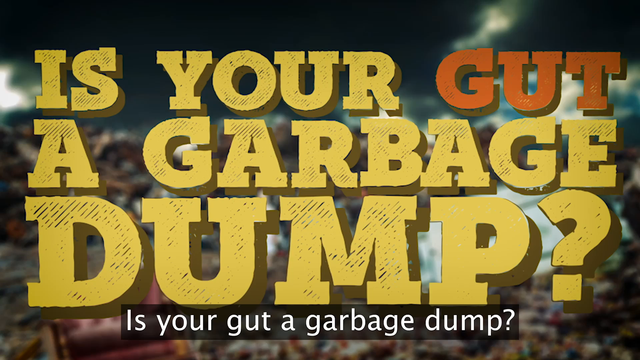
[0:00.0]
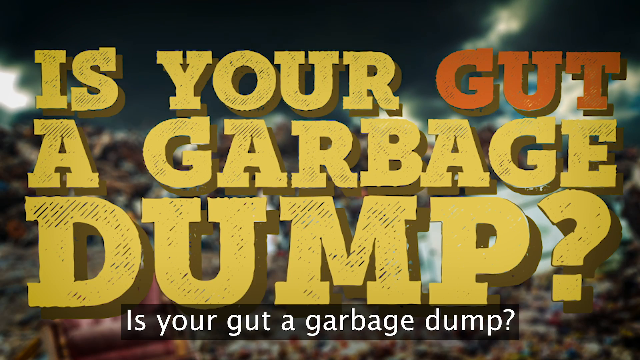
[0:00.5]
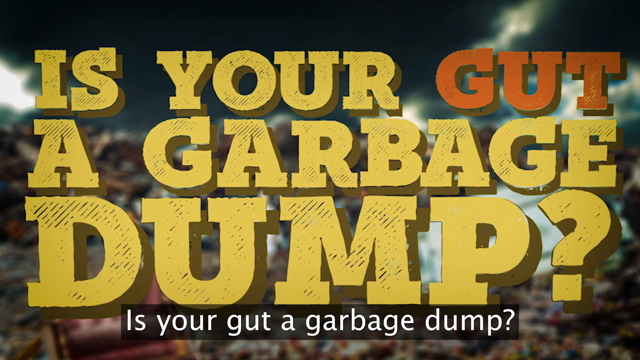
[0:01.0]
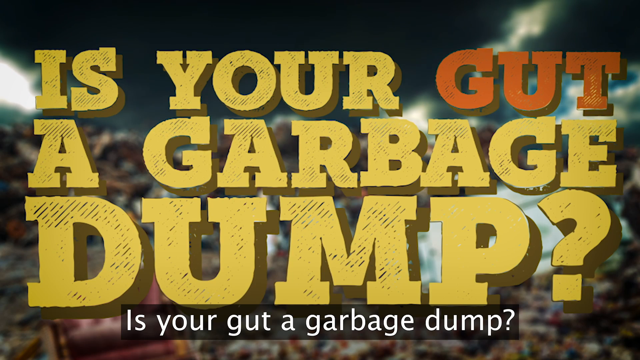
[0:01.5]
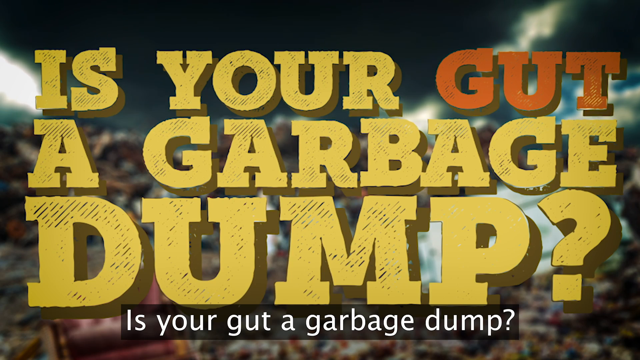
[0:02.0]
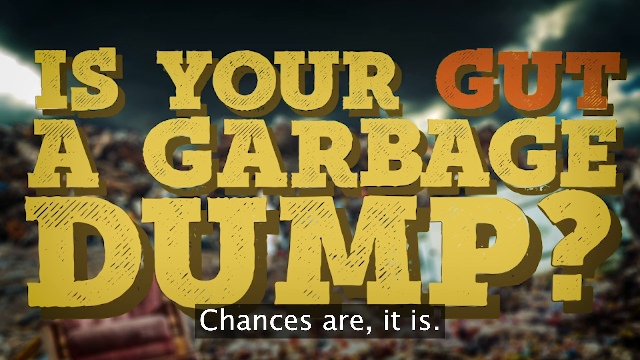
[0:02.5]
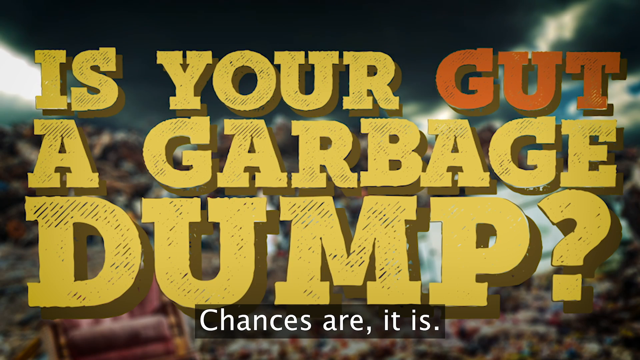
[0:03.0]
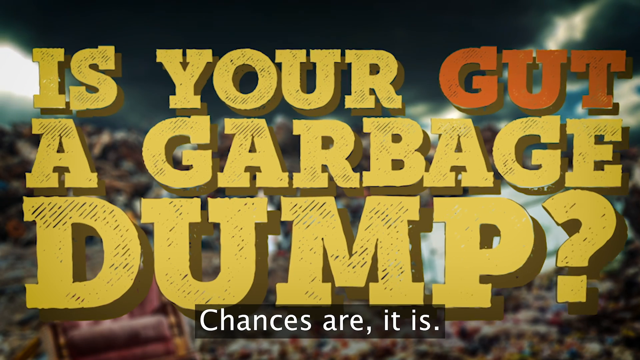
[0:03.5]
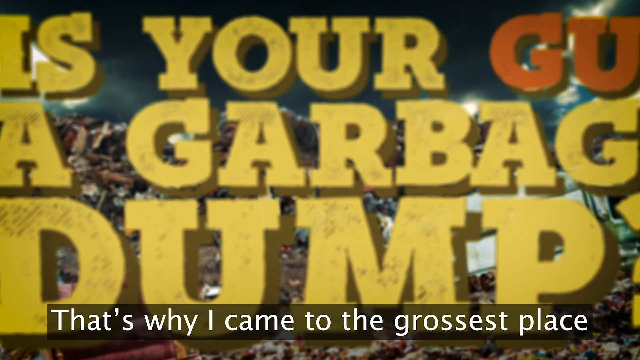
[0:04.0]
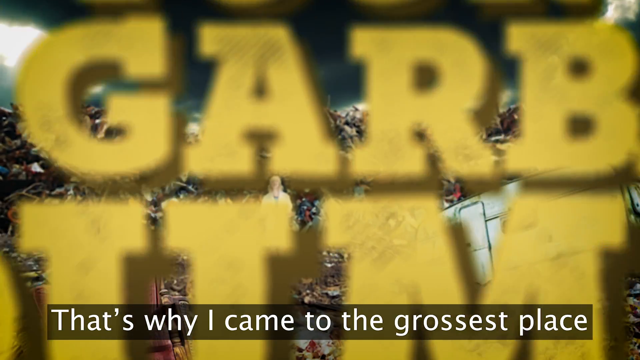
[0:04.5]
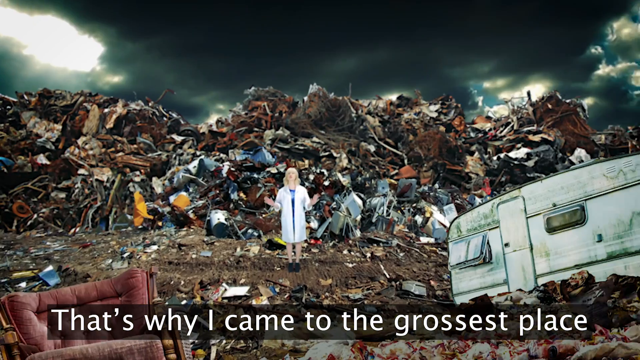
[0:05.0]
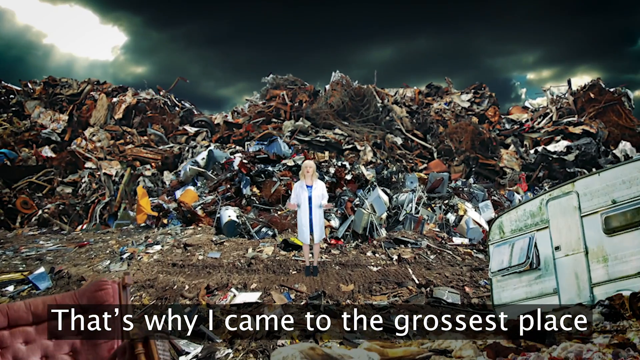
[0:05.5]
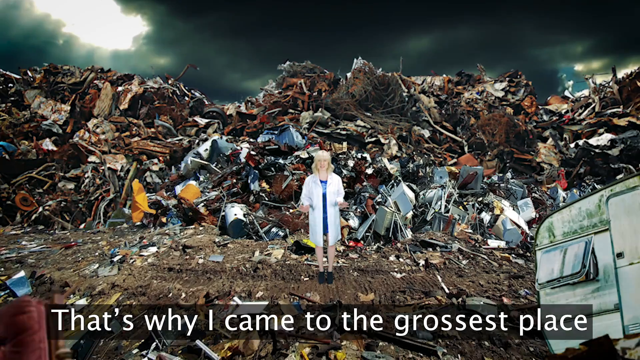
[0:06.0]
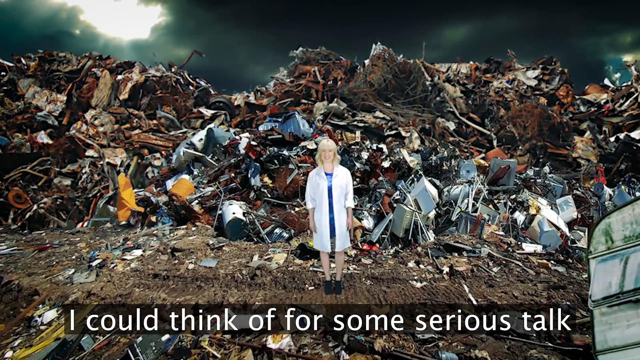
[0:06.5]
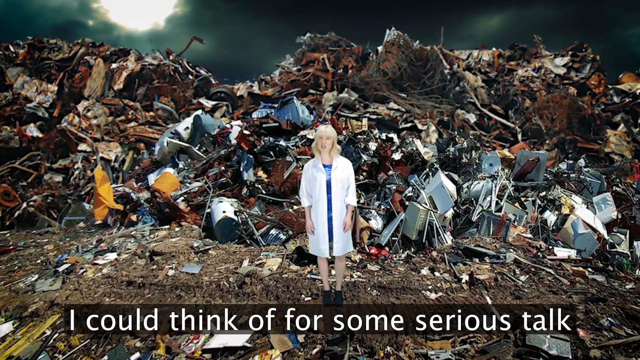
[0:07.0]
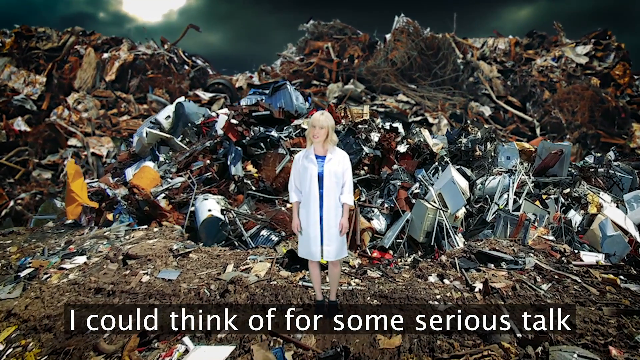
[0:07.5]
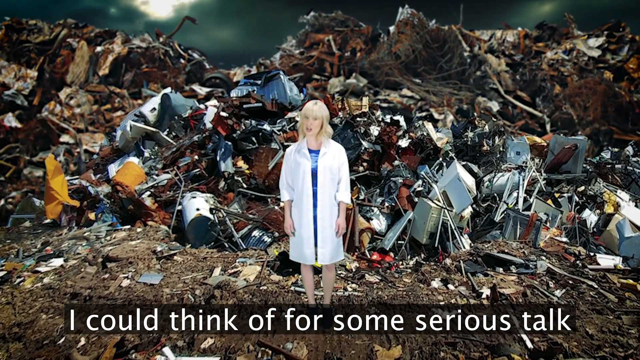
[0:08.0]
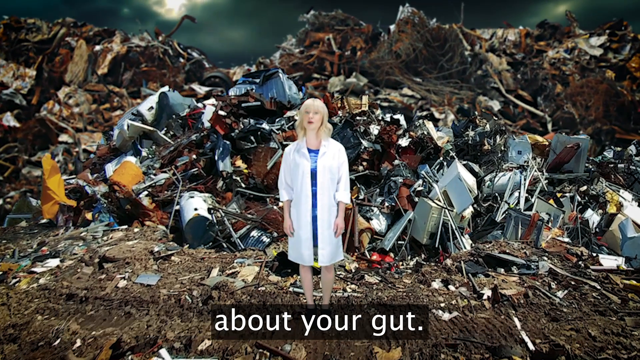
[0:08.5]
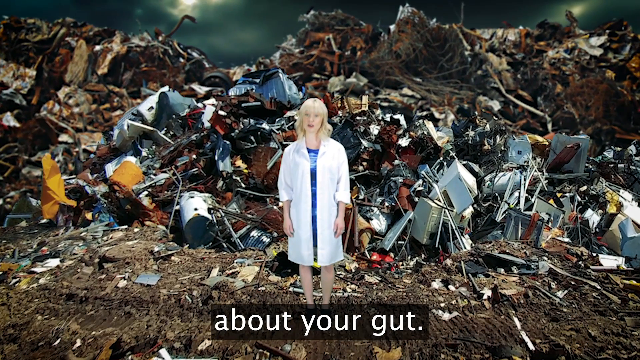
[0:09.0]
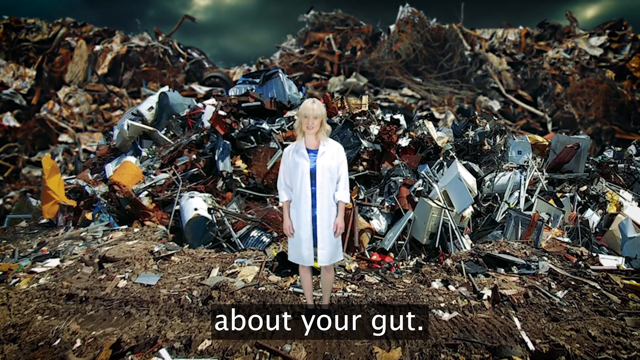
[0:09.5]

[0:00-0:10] The video opens with a text screen in yellow that reads "is your gut a garbage dump?" The background appears to be a dump, with a blonde woman in a white trench coat and a blue skirt standing in the middle of the garbage dump. The view pans closer toward her and focuses on her face, with the garbage in the background. Text at the bottom of the screen reads "did you know that there could be something you could do about it".